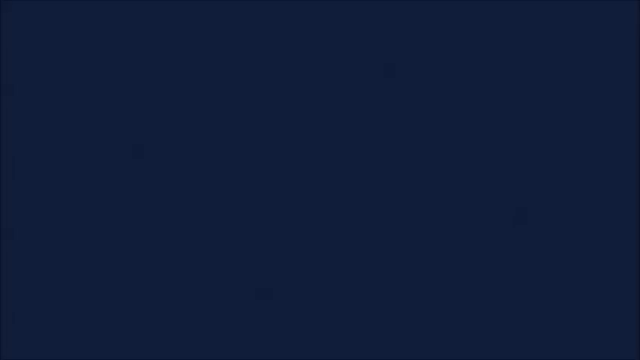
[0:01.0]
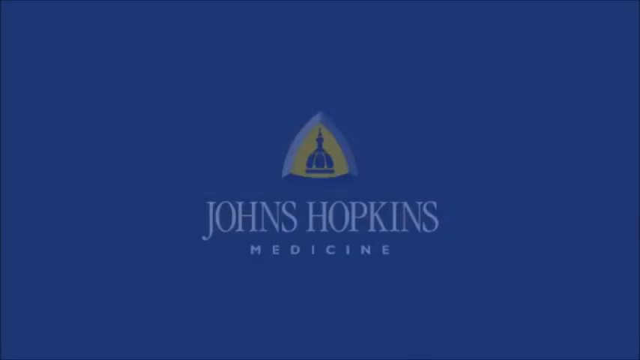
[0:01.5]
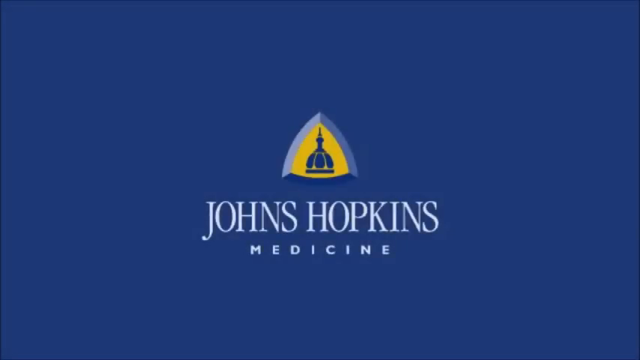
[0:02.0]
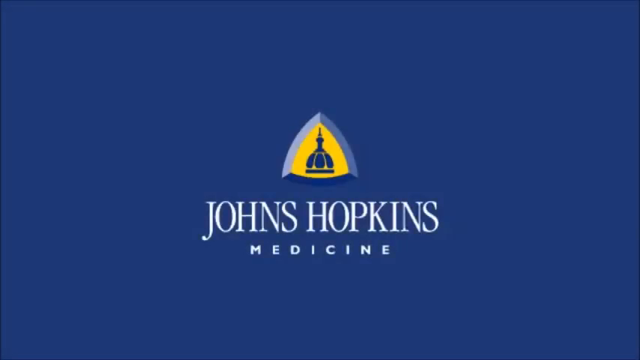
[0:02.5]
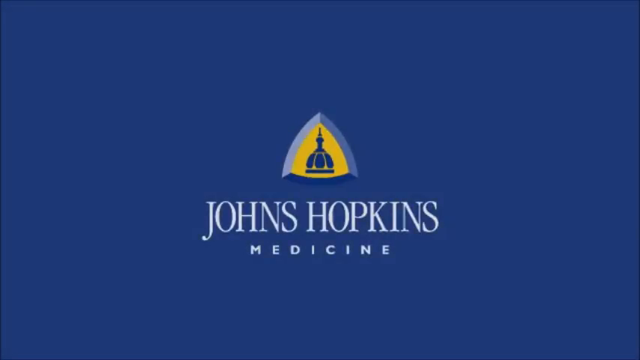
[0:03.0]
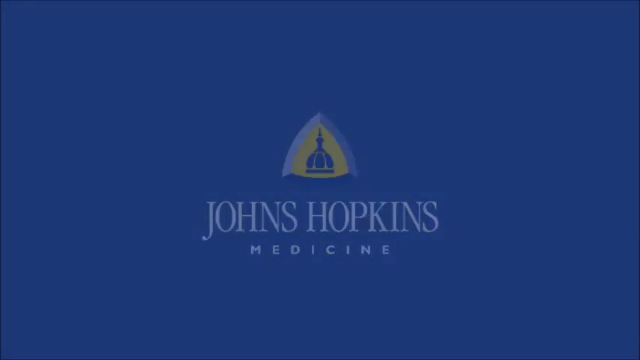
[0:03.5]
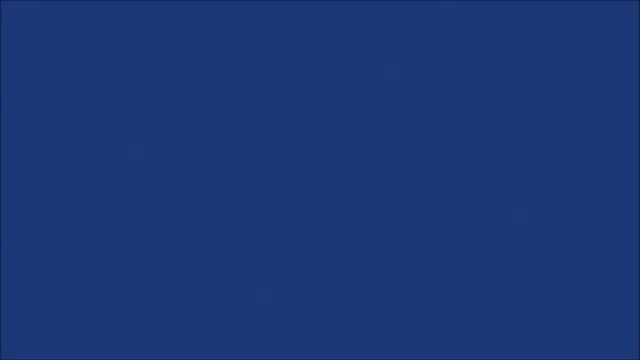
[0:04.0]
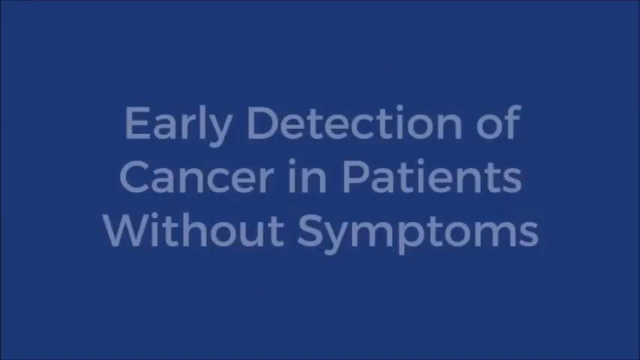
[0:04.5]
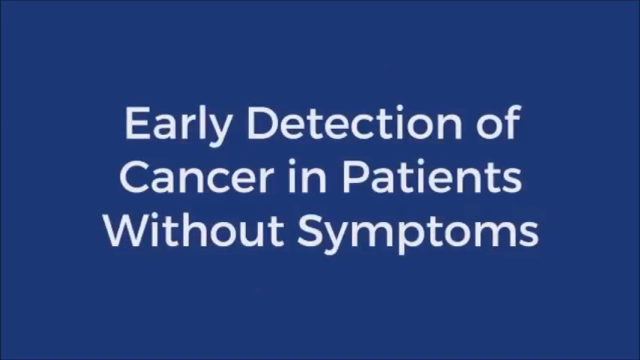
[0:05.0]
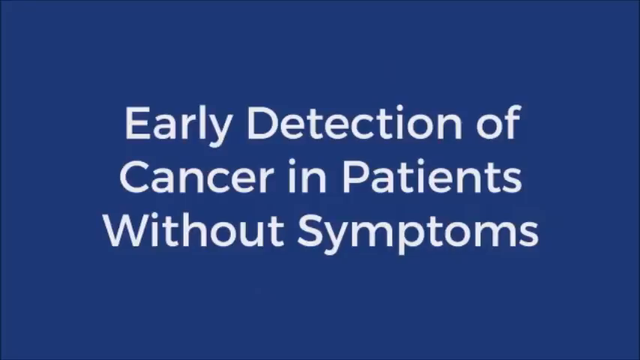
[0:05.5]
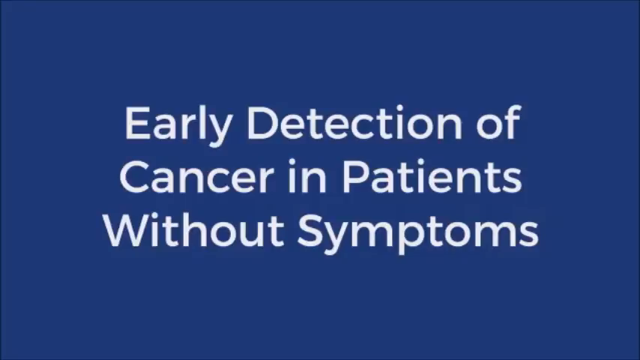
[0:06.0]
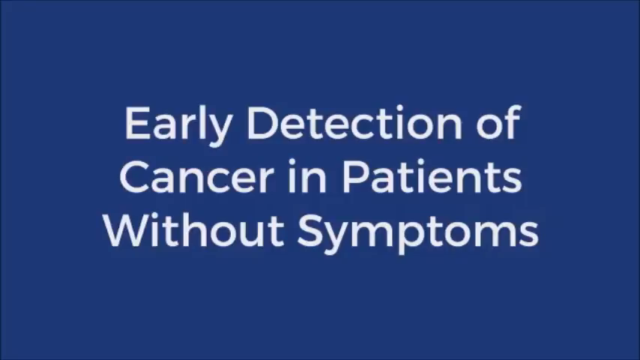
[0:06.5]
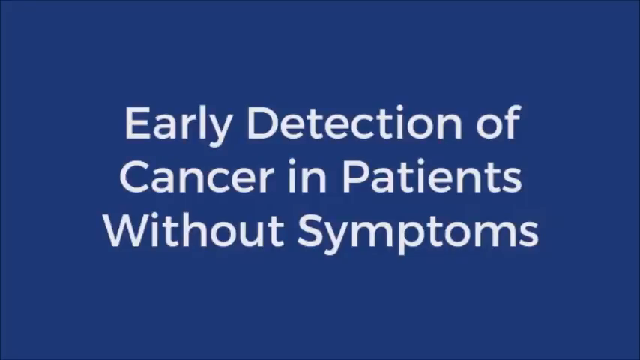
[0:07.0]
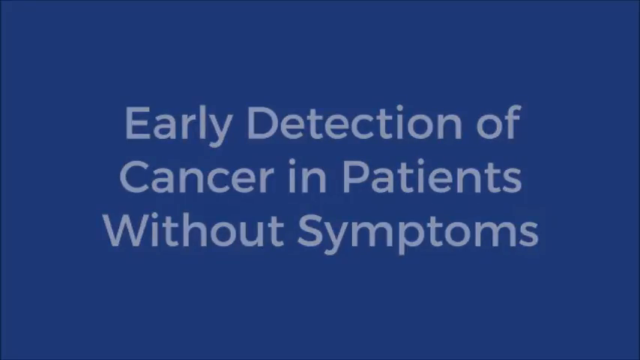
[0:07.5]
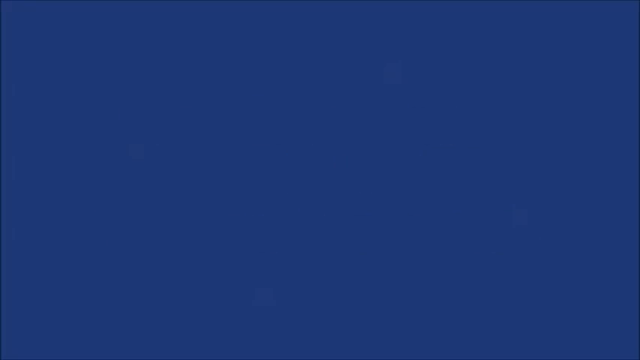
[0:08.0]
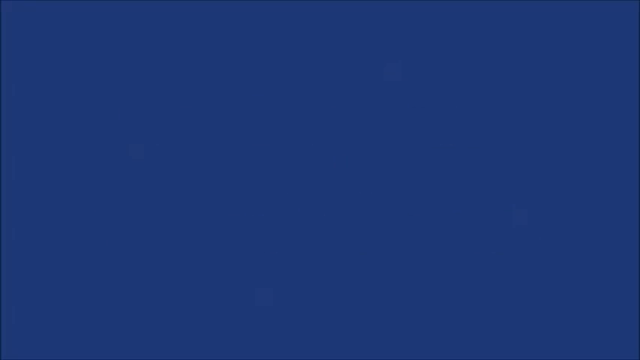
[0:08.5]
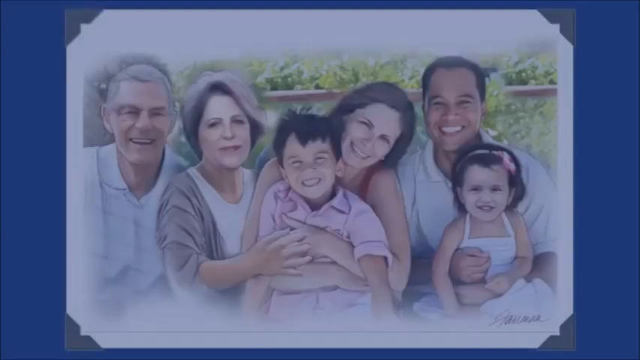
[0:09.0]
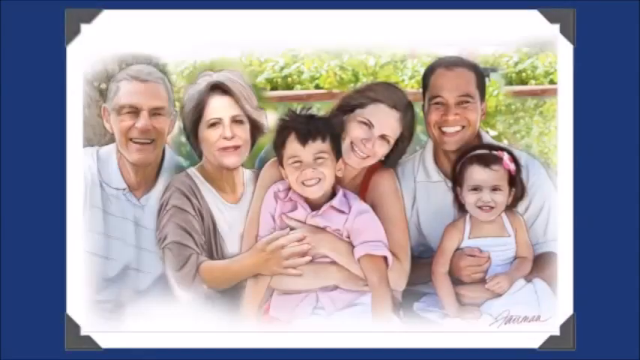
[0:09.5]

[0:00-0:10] The video opens on a black screen that transitions to a dark blue screen with the Johns Hopkins Medicine logo centered on the dark blue background. The text is in white: "Johns Hopkins" is very large, and centered directly below it, spaced out in small white font, is the word "medicine". Above the text is a type of beveled, rounded triangle in different shades of blue: the bottom is dark blue, the right side is a lighter blue, and the left side is an even lighter blue. The center is yellow, with a dark blue dome in the middle. The screen then transitions to large white letters reading "early detection of cancer in patients without symptoms". The text fades out, and a photo of a family, something like a mother, father, children and a grandmother, fills the screen.